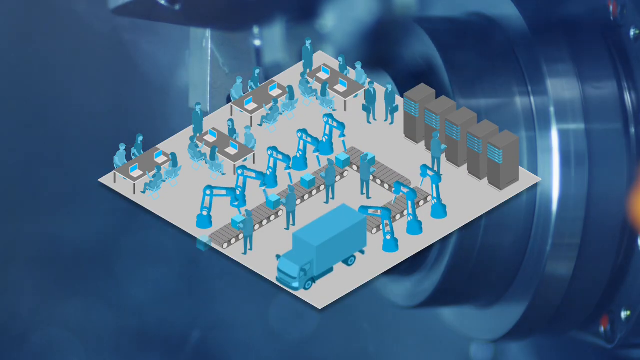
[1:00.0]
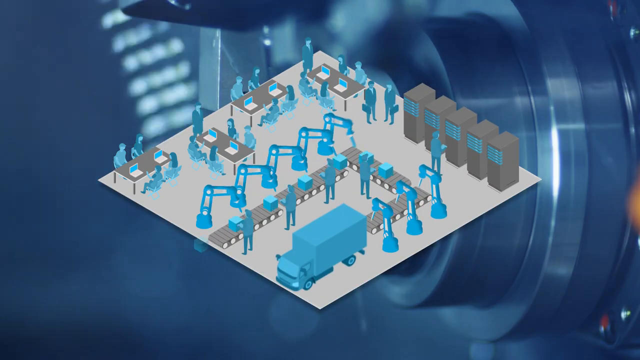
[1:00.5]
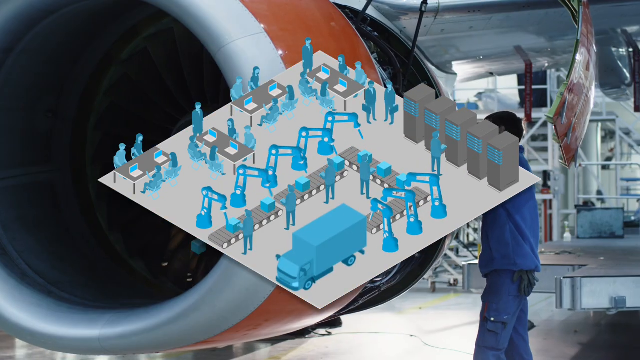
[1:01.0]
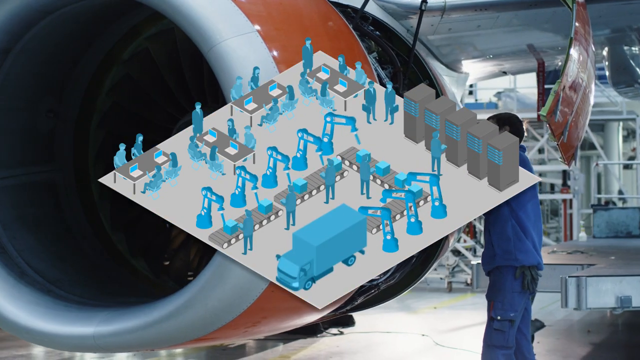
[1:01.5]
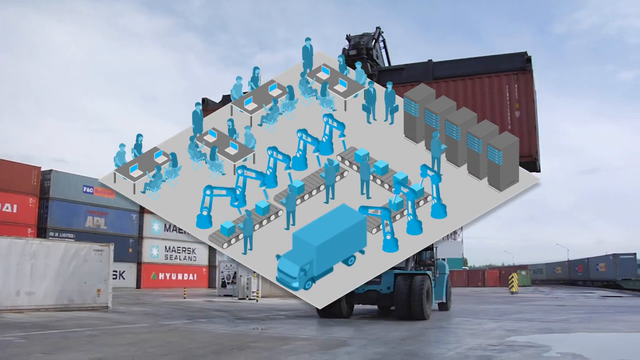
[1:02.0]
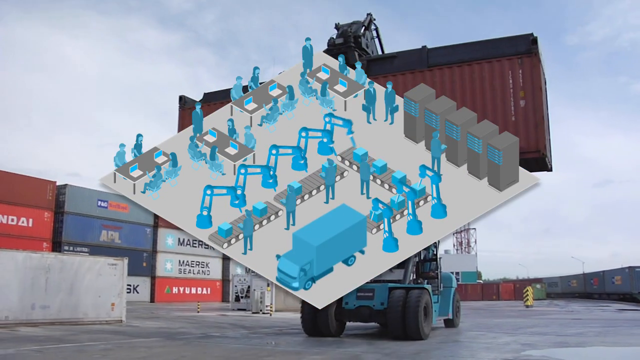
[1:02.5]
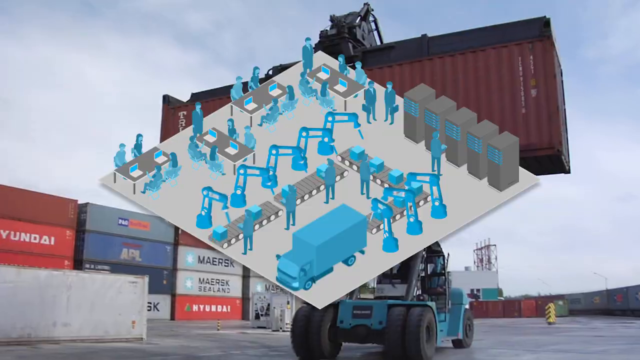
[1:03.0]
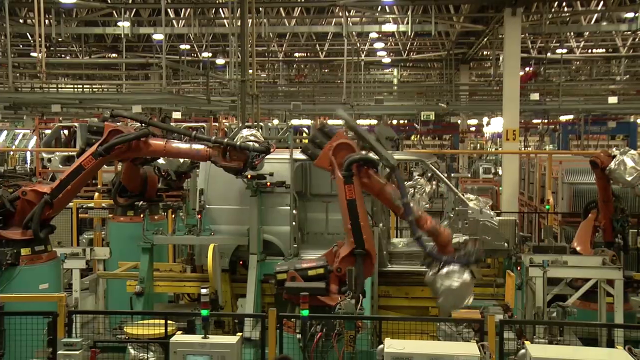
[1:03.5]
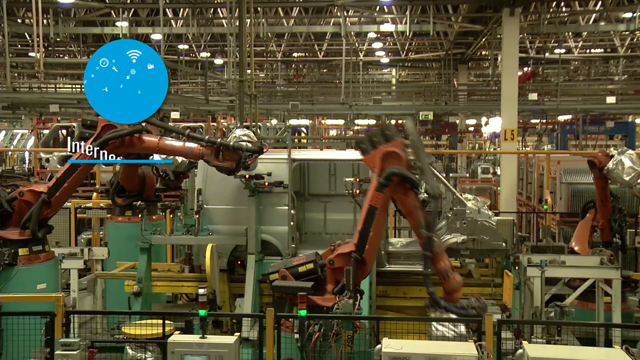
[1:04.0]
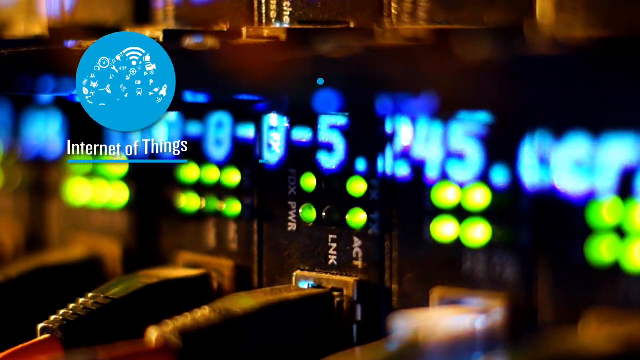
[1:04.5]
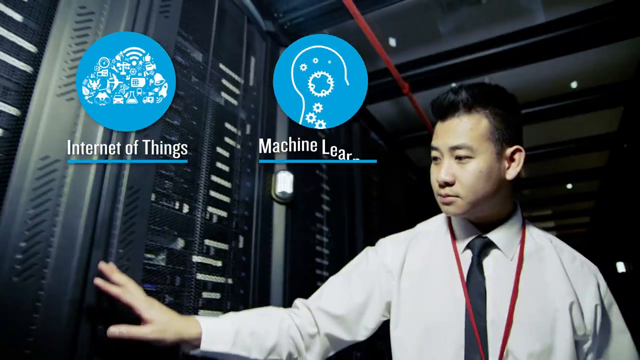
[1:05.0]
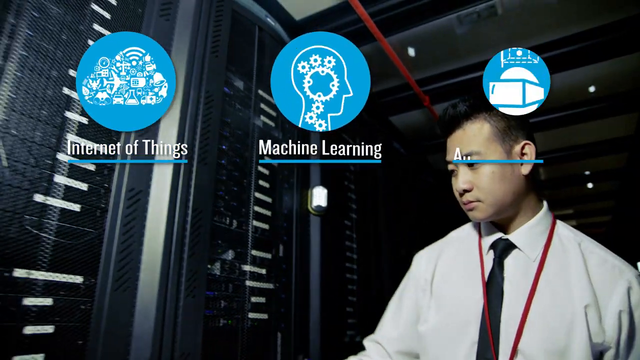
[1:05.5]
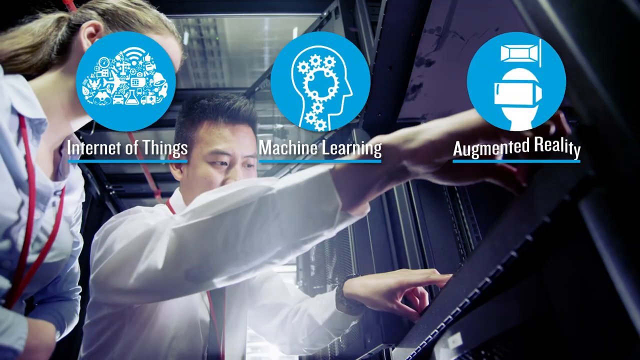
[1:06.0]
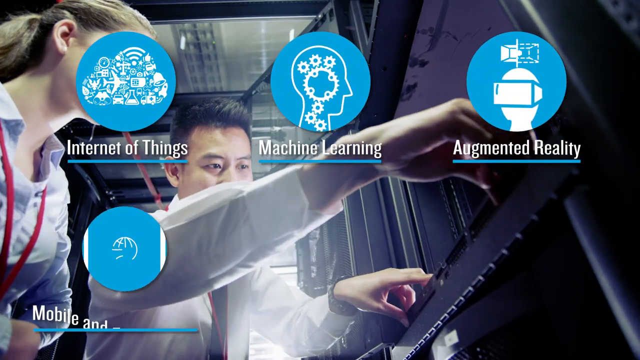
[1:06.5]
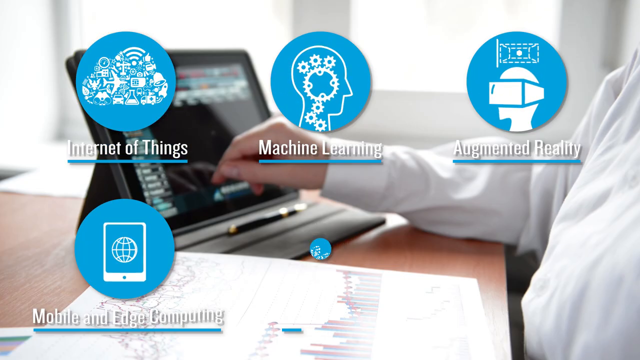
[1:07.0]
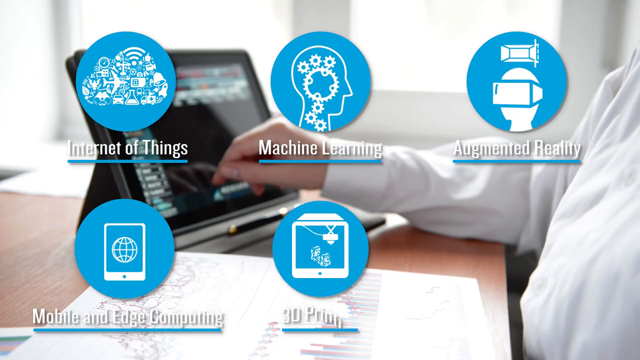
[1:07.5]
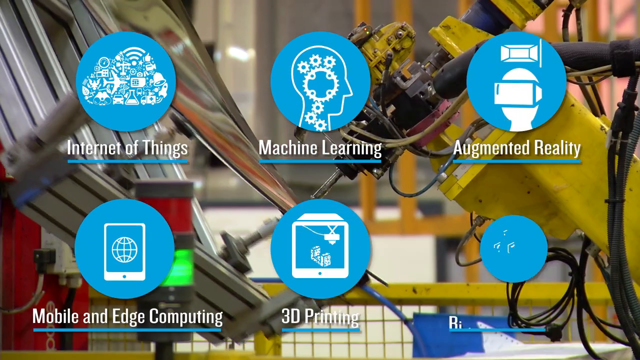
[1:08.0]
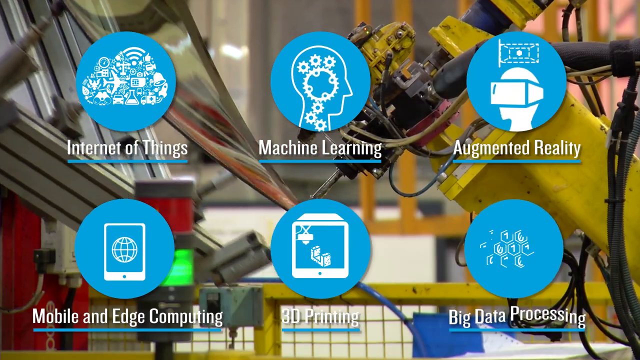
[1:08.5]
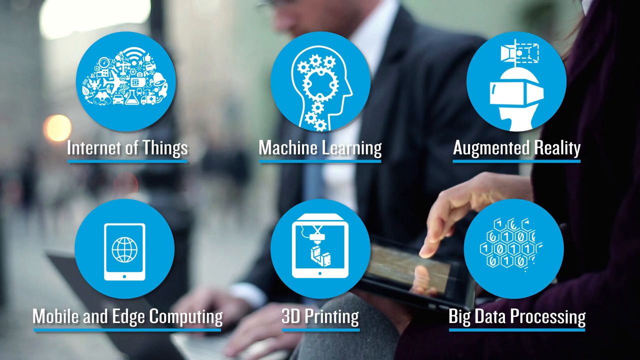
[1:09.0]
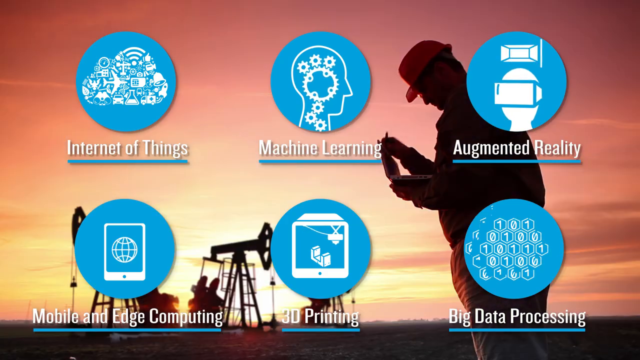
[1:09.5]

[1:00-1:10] What appears to be a graphic of an industrial job shows different types of machinery moving along and people working at desks with computers in front of them. In the background are different types of machinery, including an airplane and a piece of equipment with what looks like some sort of cargo container on the front of it. The screen then turns into what look like more images of people working on machines. Three blue circles pop up, reading "Internet of Things", "machine learning" and "augmented reality". Then three more circles pop up at the bottom of the screen, reading "mobile and edge computing", "3D printing" and "big data processing".